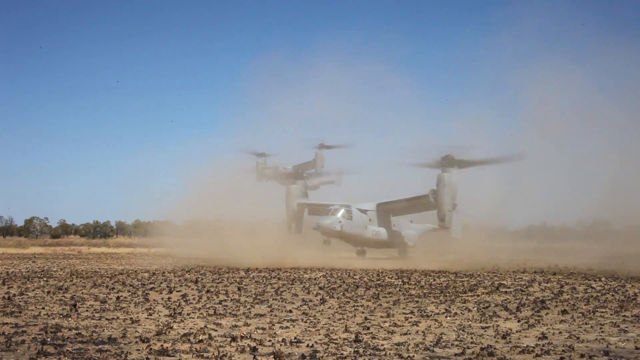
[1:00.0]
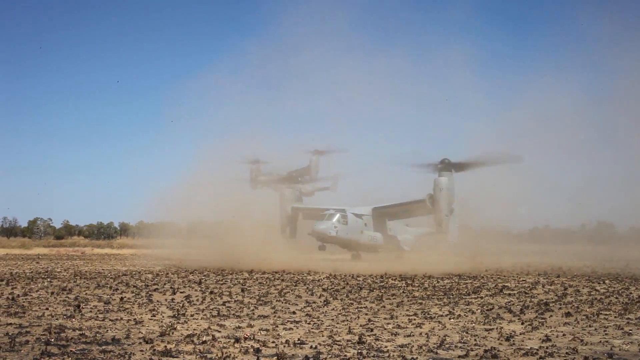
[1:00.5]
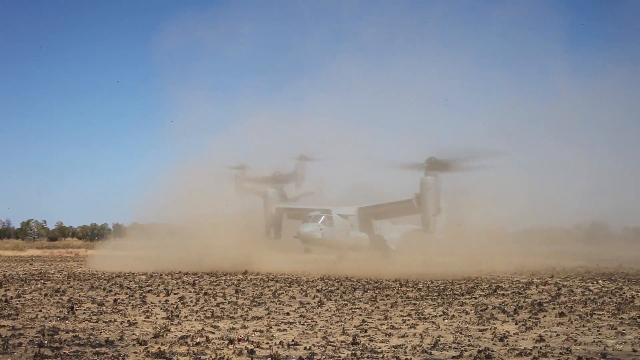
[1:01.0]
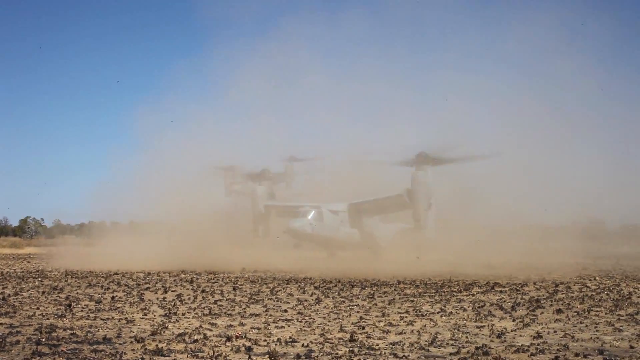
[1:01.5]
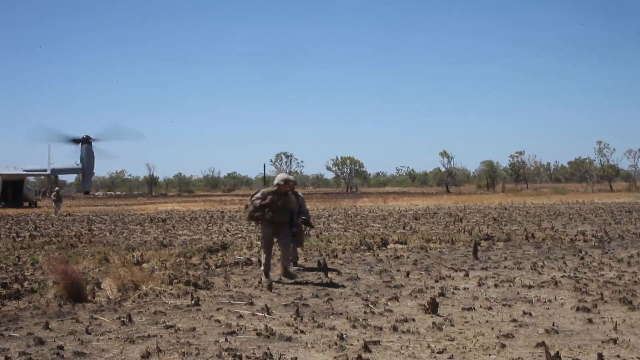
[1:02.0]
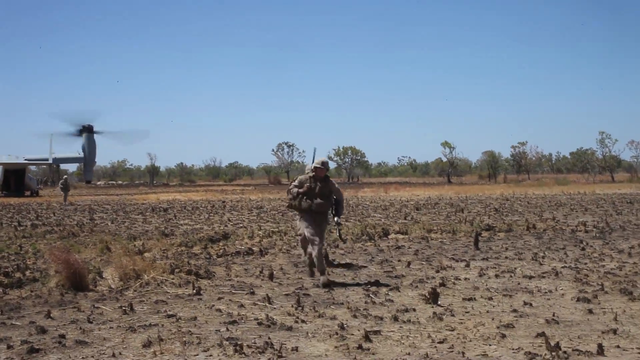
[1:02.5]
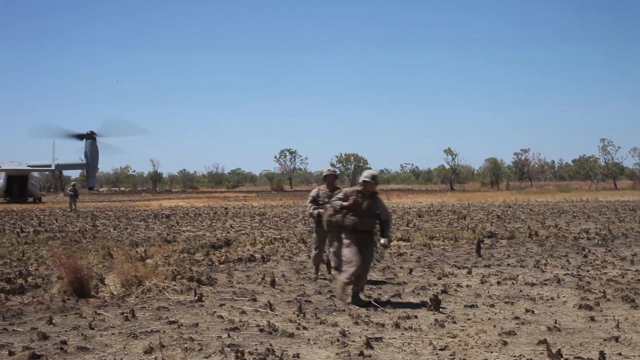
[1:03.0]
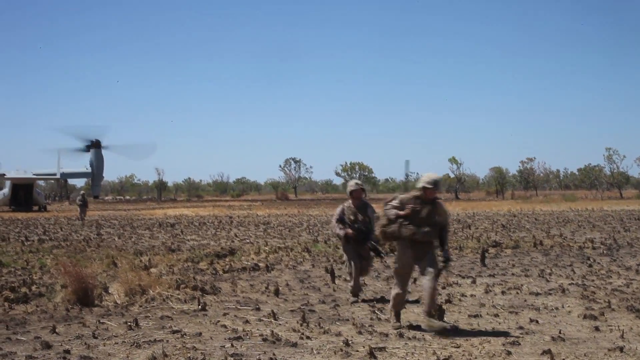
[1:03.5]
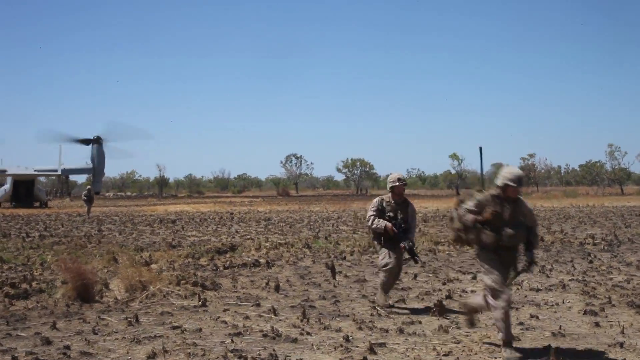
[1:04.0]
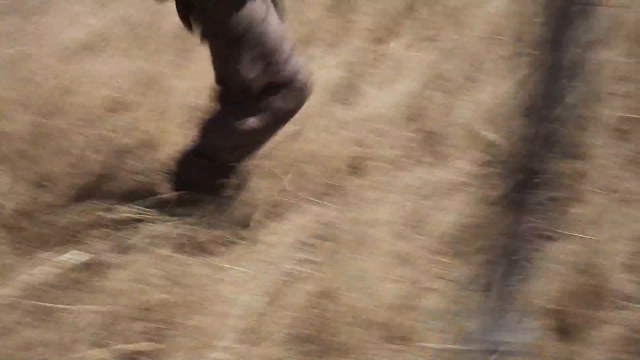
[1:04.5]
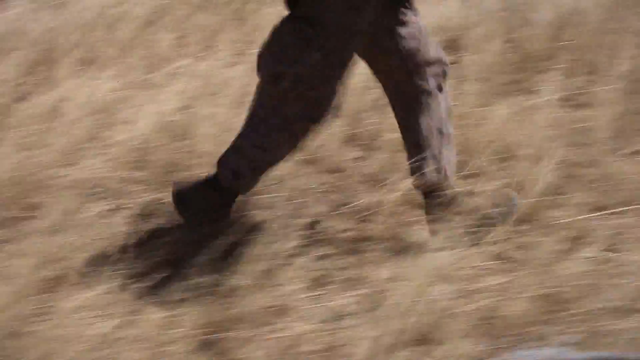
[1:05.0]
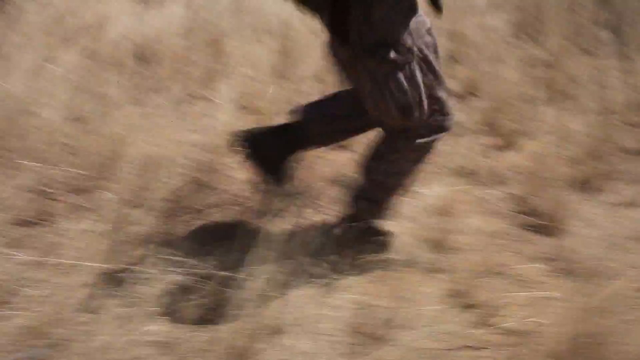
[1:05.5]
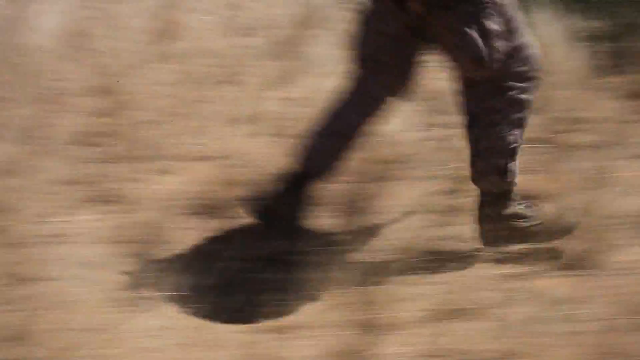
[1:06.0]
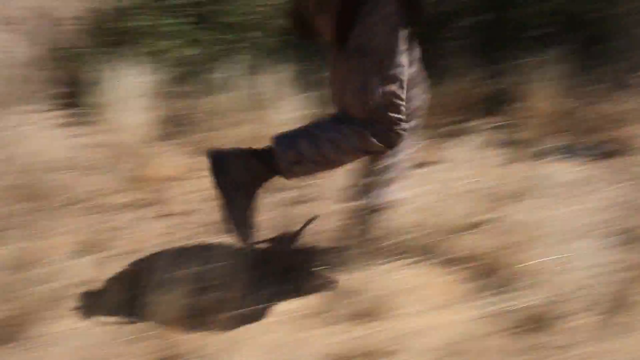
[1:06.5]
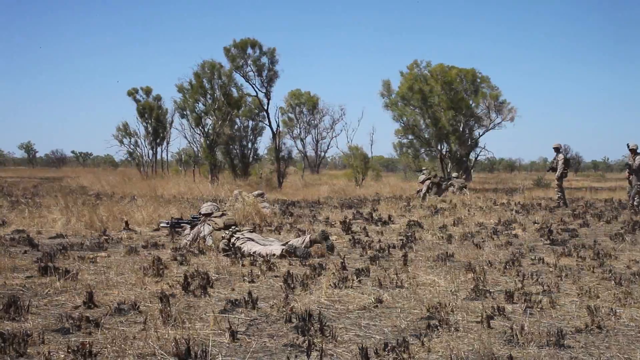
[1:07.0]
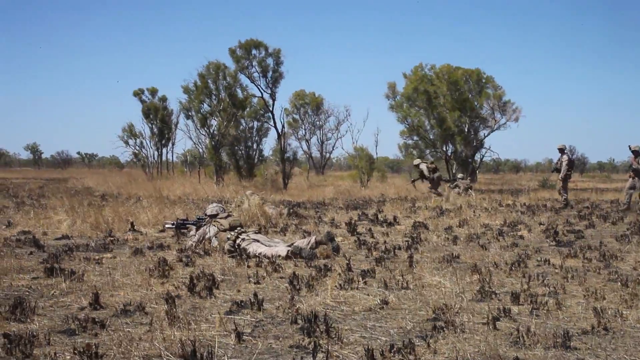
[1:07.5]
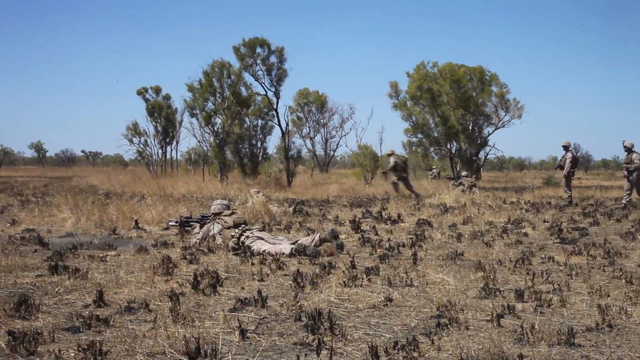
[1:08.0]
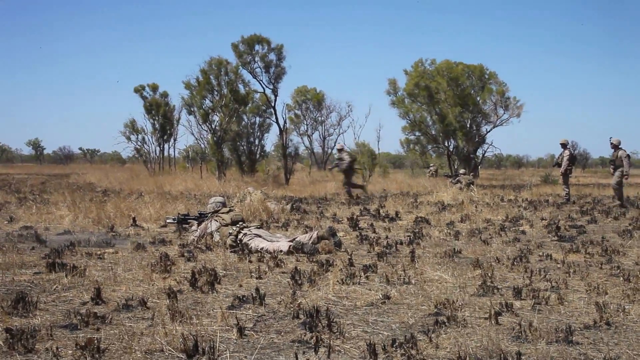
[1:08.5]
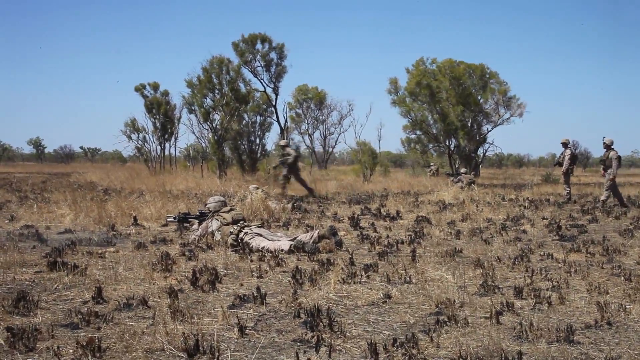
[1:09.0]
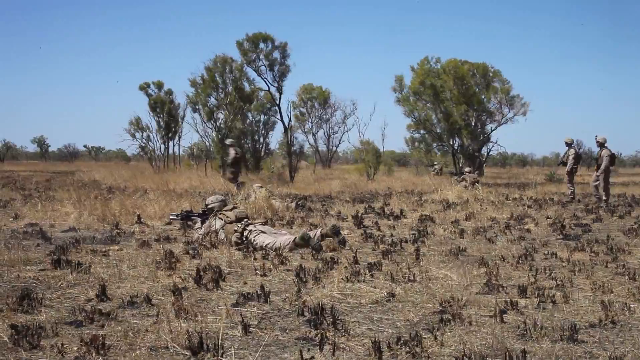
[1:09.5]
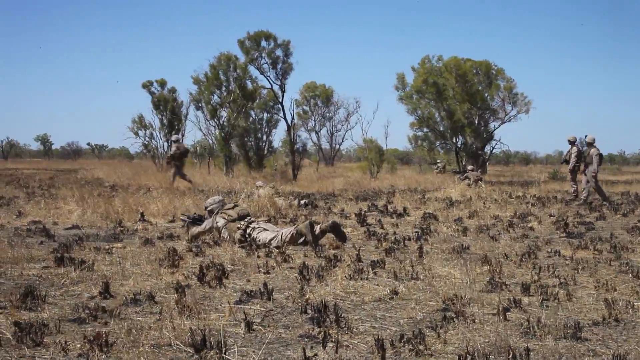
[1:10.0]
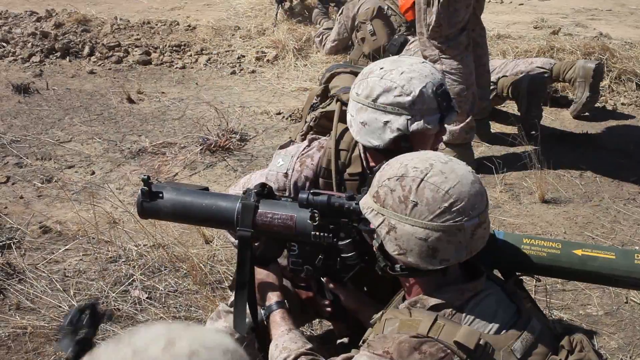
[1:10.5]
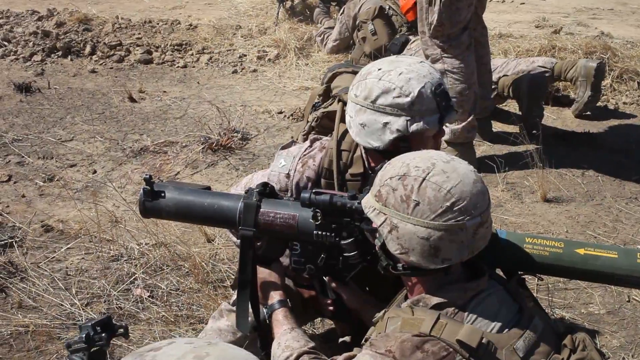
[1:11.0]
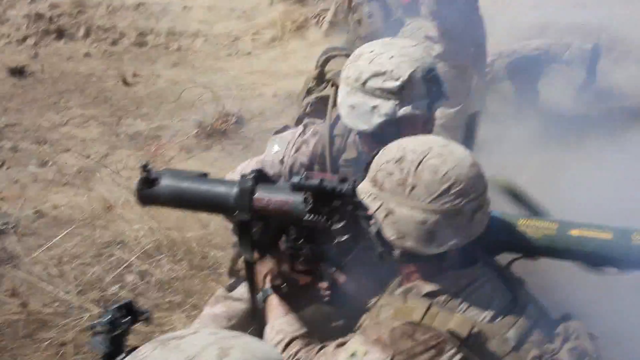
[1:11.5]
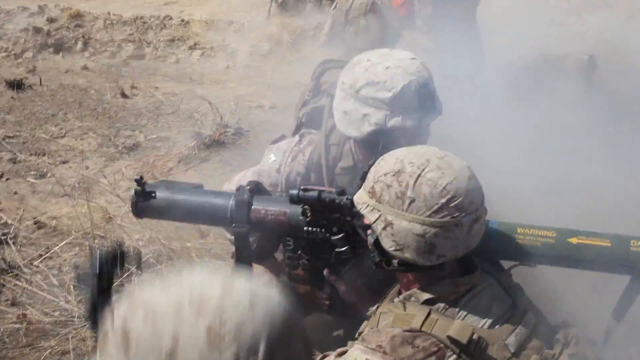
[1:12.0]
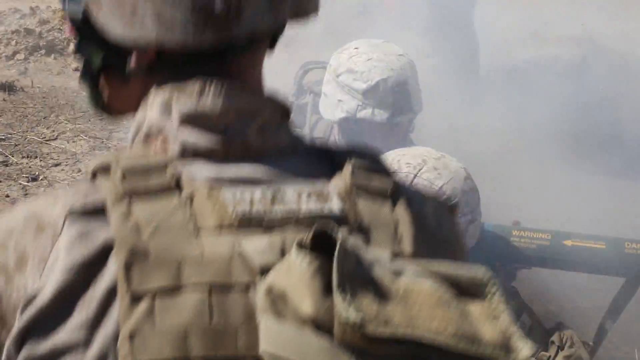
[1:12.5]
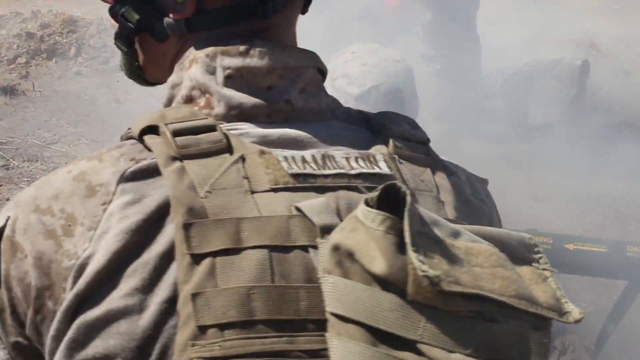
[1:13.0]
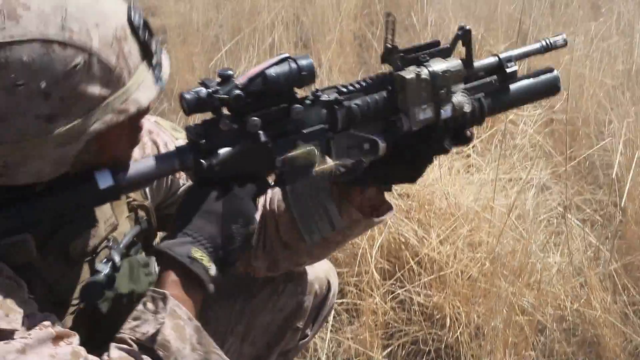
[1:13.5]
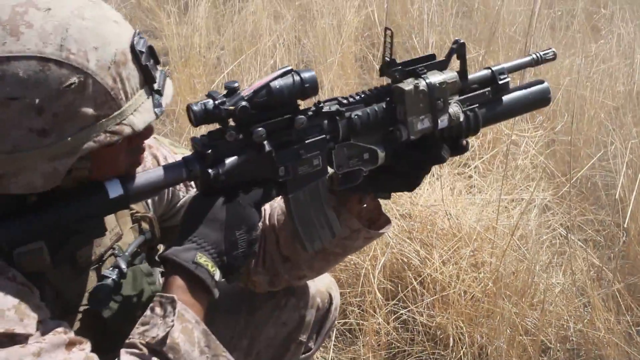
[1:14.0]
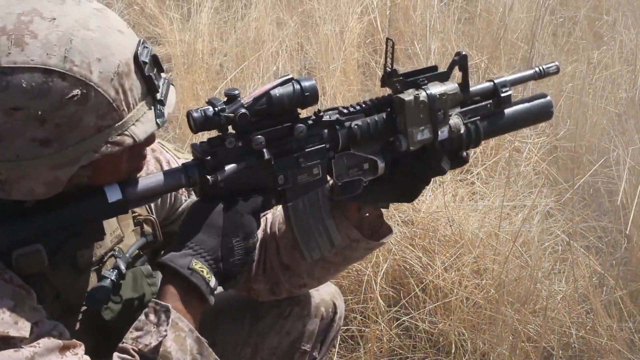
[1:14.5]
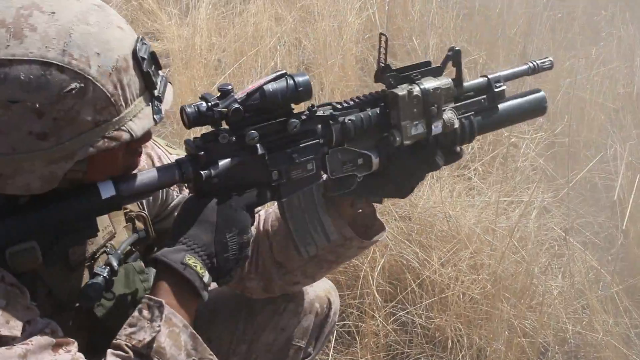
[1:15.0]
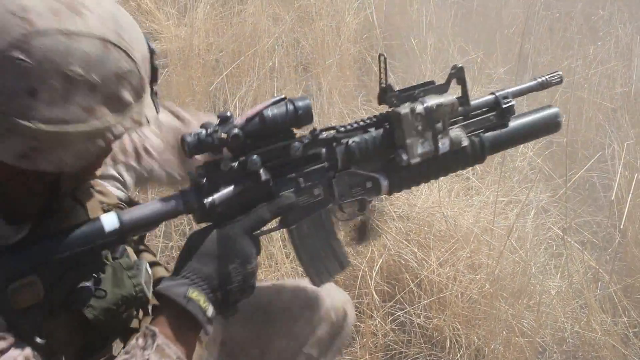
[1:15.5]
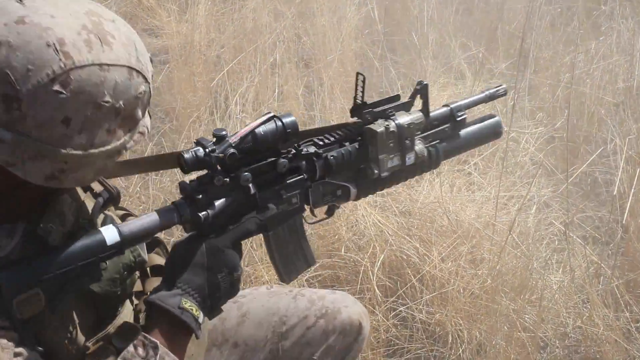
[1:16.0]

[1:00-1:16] A vertical takeoff and landing vehicle, its propellers set up to spin above the aircraft, lands in a flat field, surrounded by dust clouds as it lands. The video cuts to soldiers running from the landed aircraft. Three soldiers are visible in all, two in the foreground and one closer to the plane on the left side in the background, running towards the bottom right of the screen. One soldier has a rucksack and rifle on his back. A cut shows the feet of one of the soldiers, who seems to be running. Then multiple soldiers in the same field do bounding exercises: one soldier lies on his stomach with his rifle at the ready, and another stands up and runs towards the left of the screen. Two observers stand watching them train. The footage cuts to soldiers setting up a recoilless rifle and promptly firing it. One soldier is looking towards the back of it and one is looking down the sight on its left side. Then a different soldier stands up as if observing where the recoilless rifle hit.